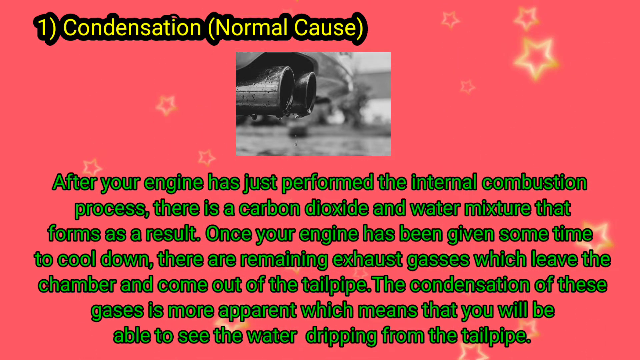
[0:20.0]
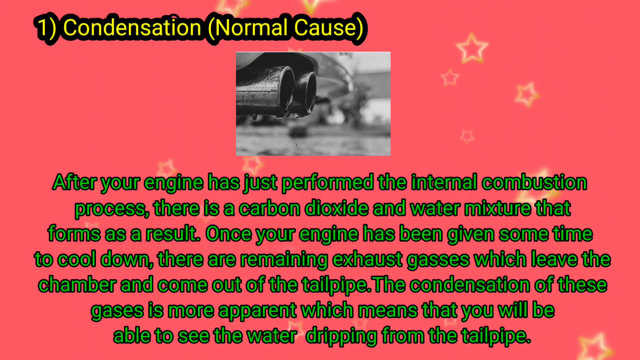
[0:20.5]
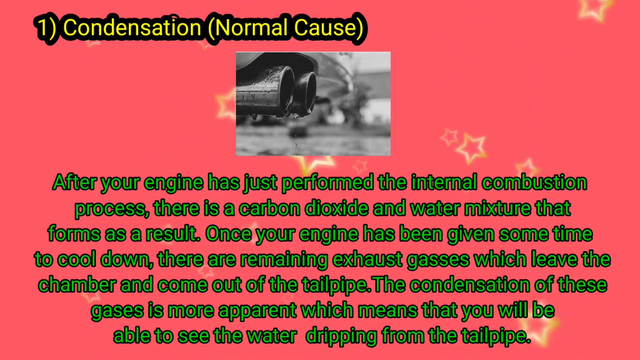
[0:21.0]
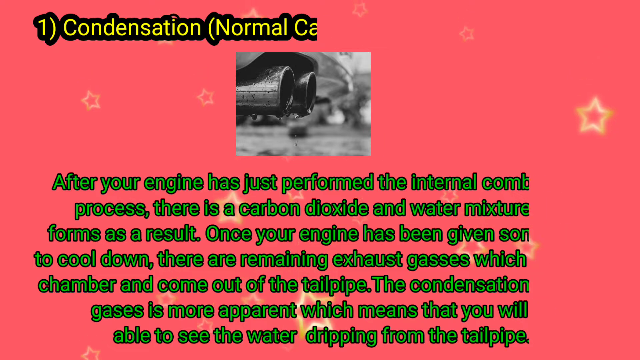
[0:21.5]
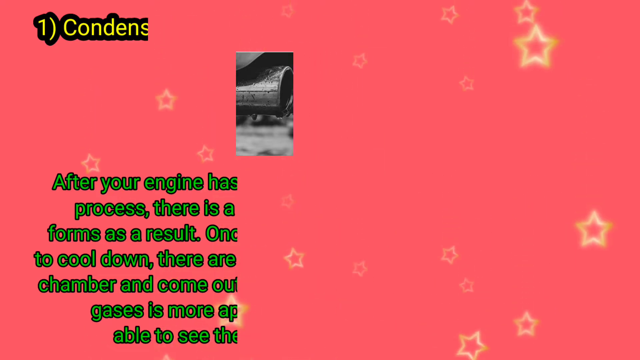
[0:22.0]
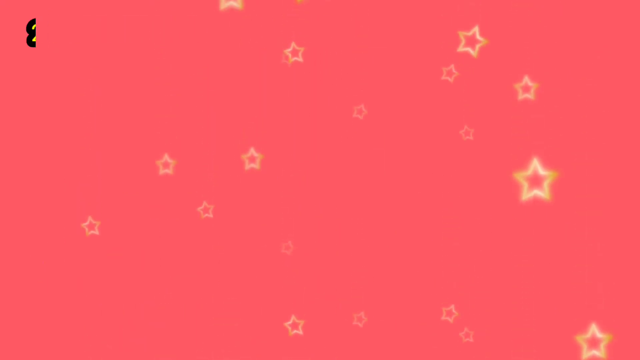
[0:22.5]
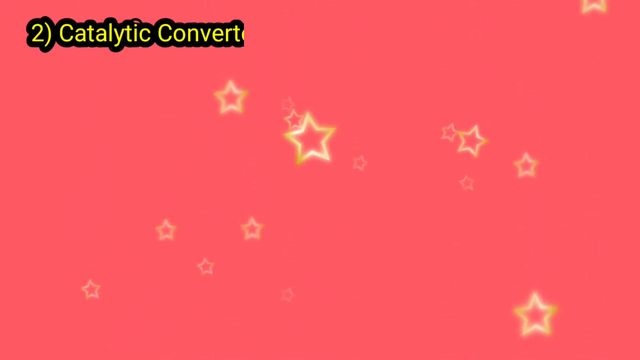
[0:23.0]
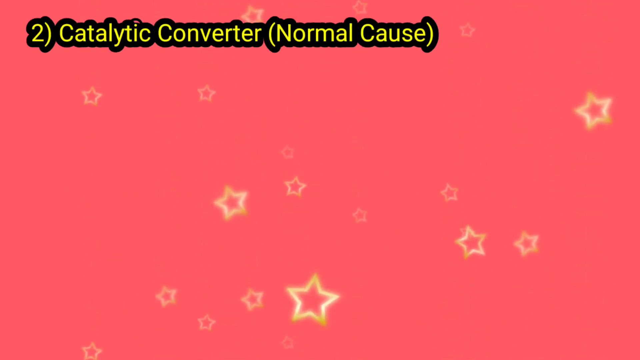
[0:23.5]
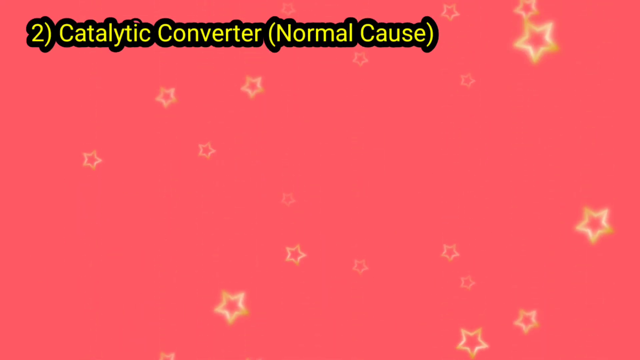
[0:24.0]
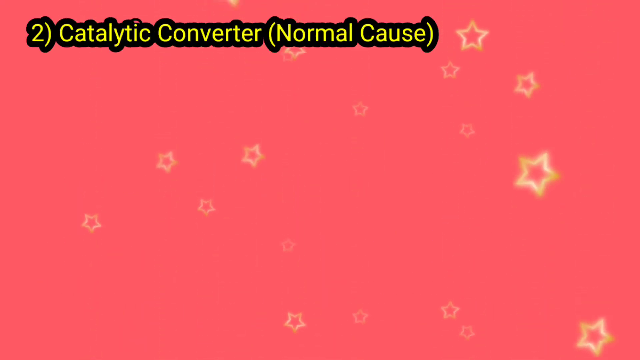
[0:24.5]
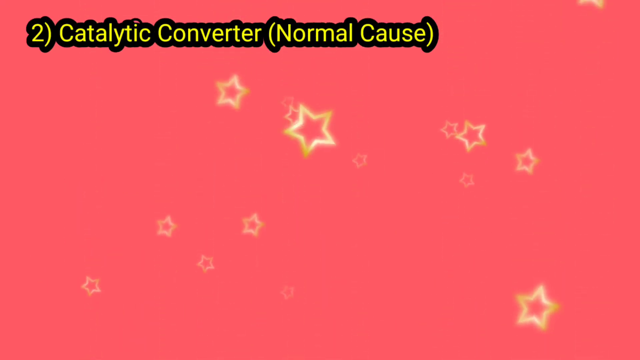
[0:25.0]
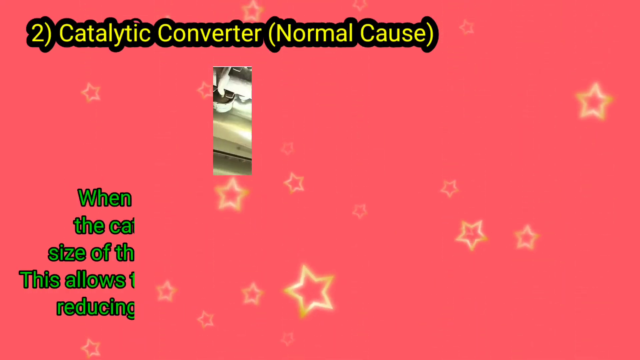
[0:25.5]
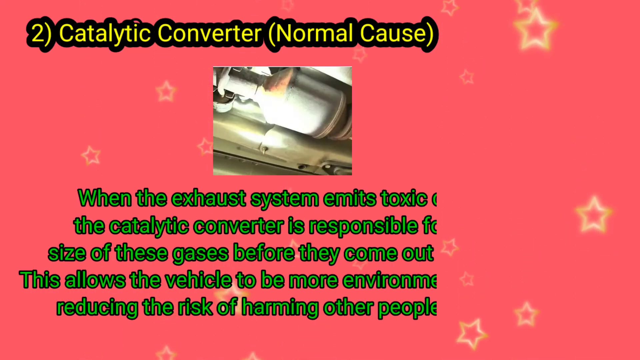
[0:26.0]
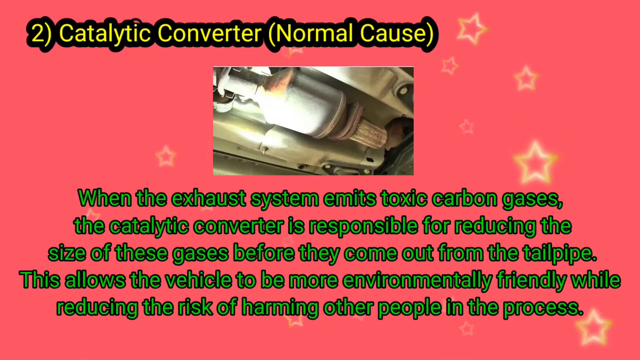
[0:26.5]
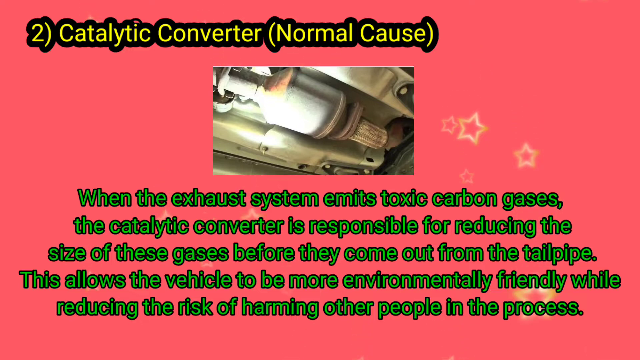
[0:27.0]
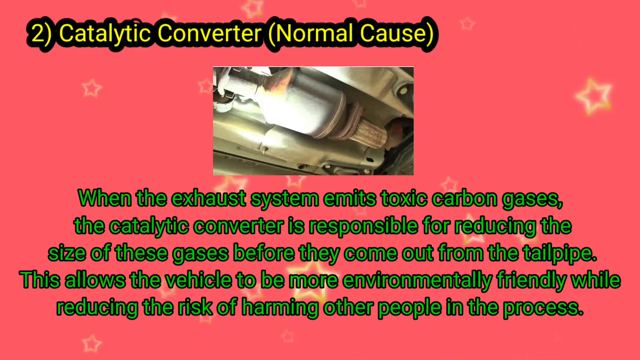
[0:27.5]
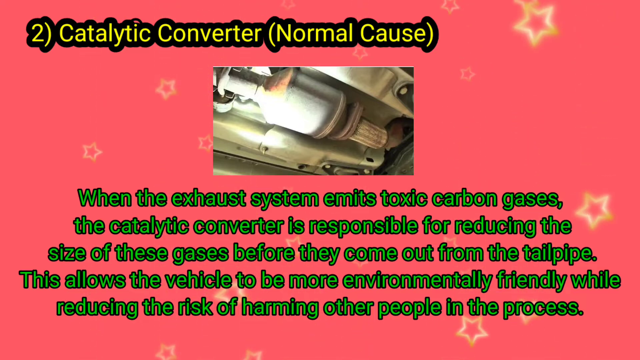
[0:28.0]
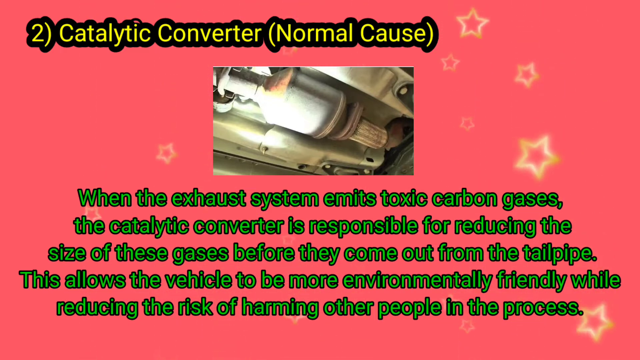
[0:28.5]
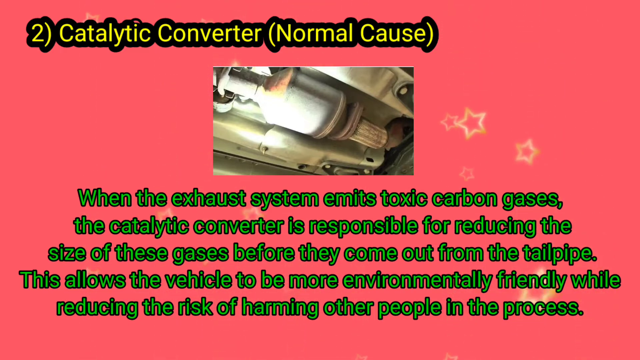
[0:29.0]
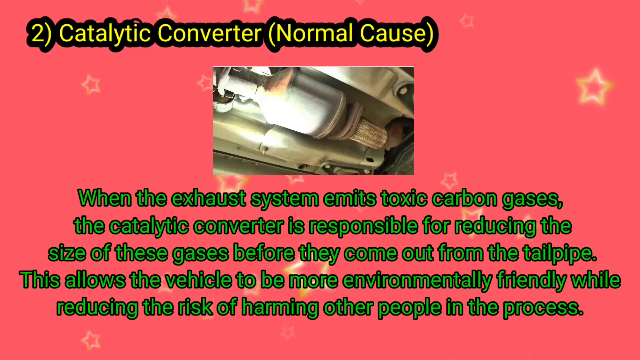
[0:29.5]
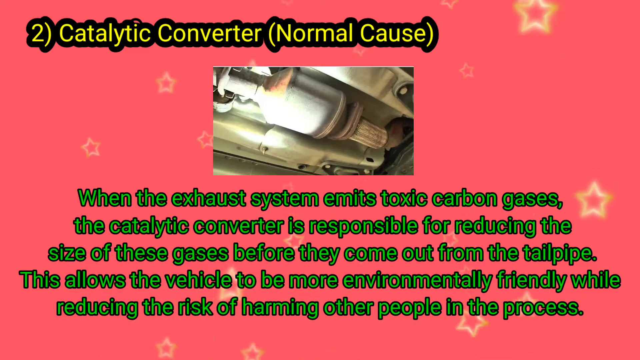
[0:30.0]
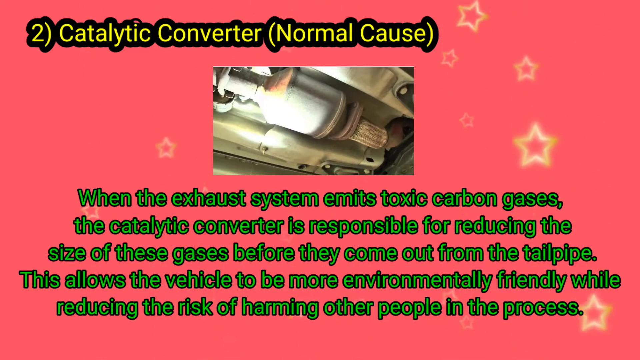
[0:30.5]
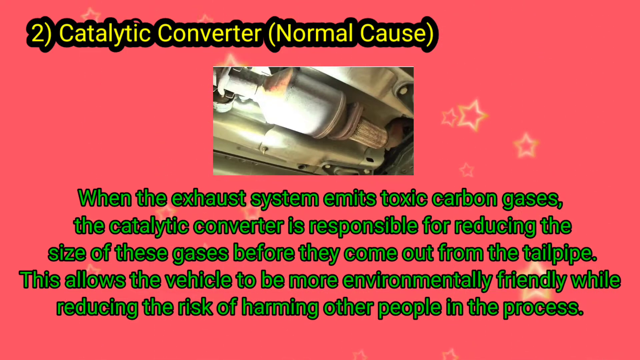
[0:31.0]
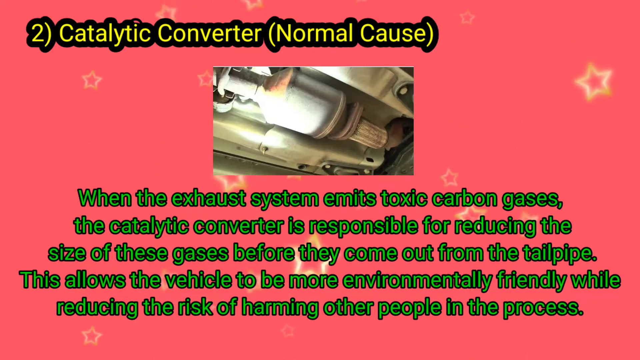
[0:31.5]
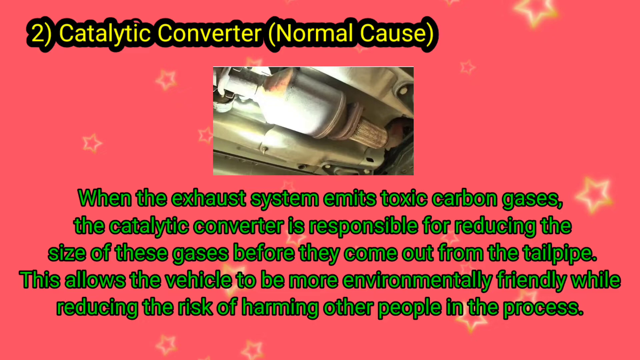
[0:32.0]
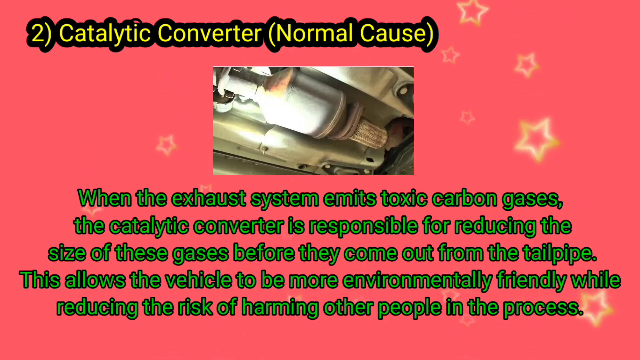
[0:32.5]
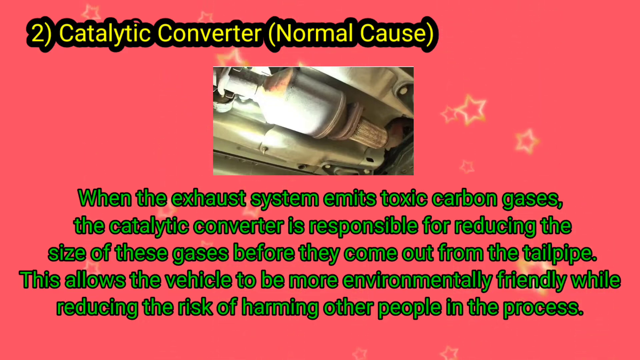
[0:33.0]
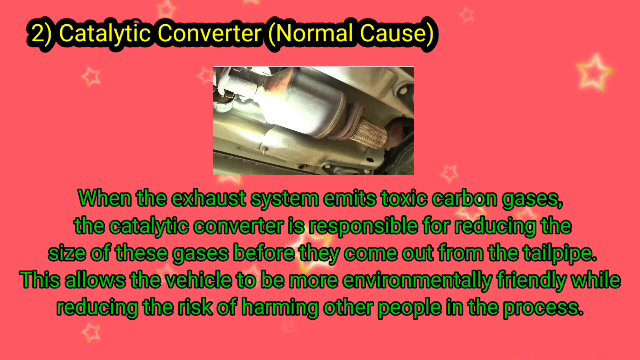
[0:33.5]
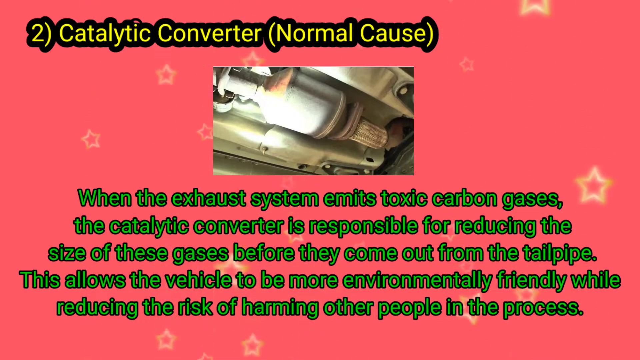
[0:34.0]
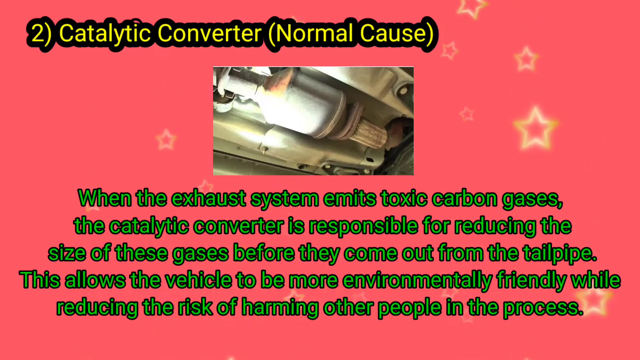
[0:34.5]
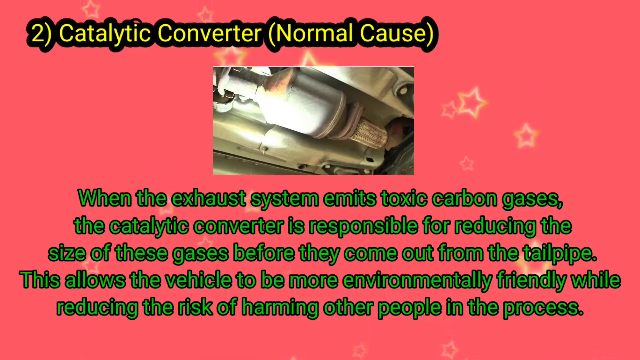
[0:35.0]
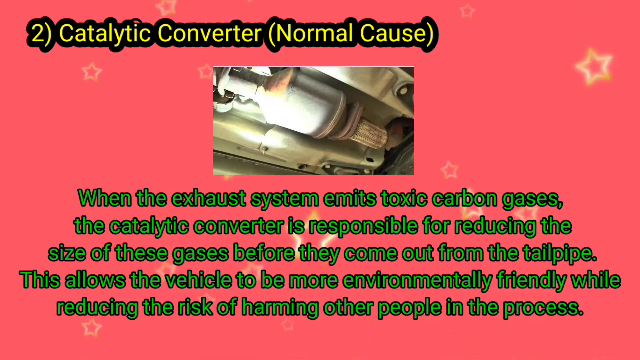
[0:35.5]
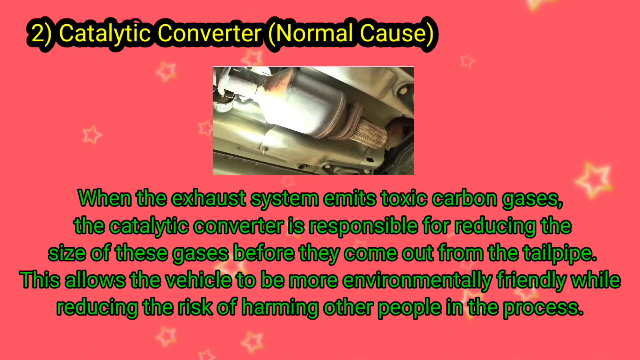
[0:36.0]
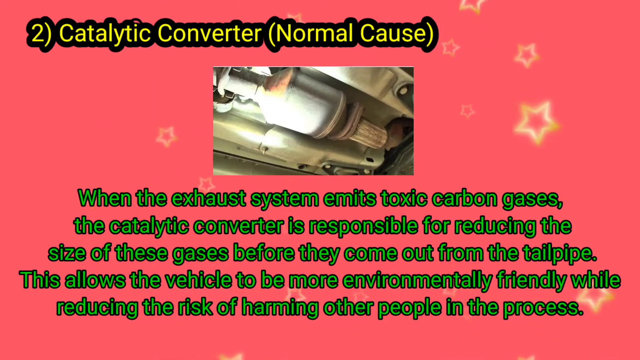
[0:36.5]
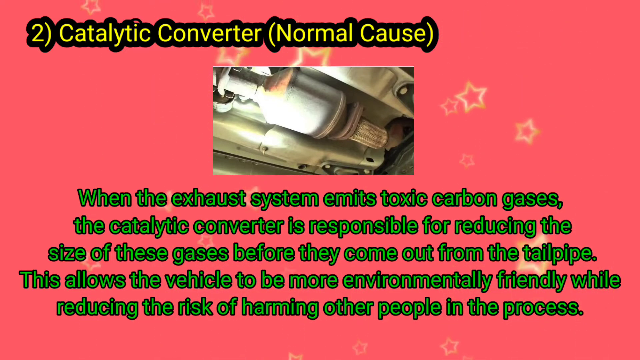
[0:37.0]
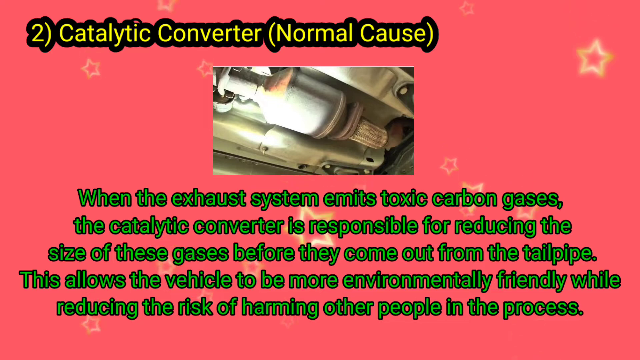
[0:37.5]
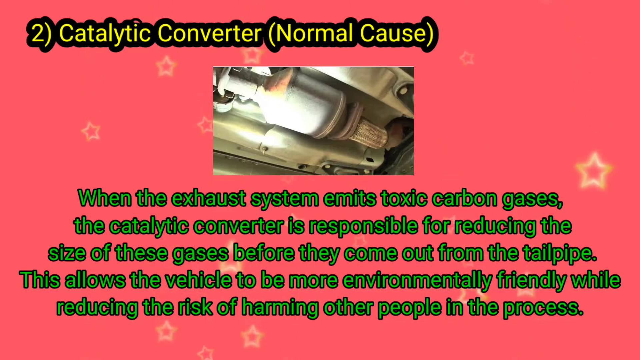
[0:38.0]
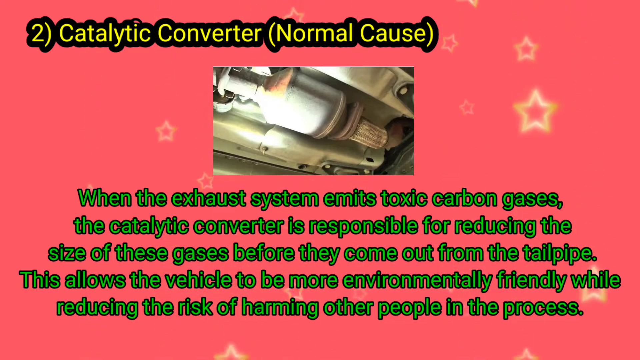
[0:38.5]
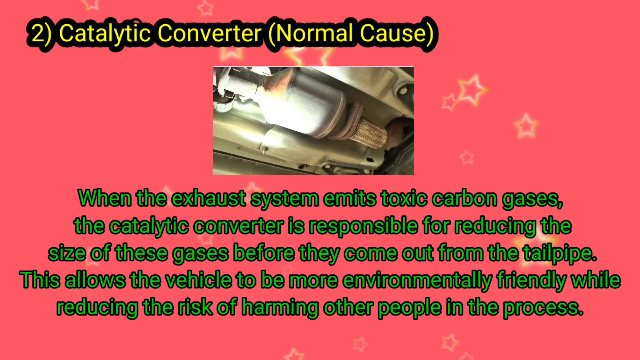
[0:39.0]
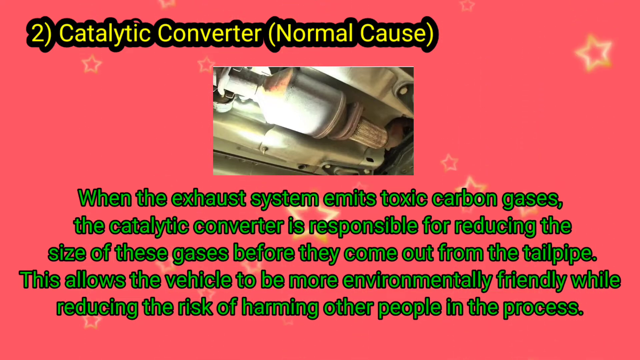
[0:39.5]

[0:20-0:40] Yellow stars fall downwards over a pink background. In the top center is a black and white photo of two gray tailpipes. Yellow lettering at the top reads "one condensation, normal cause", and green text below it reads "after your engine has just performed the internal combustion process, there is a carbon dioxide and water mixture that forms as a result. Once your engine has been given some time to cool down, there are remaining exhaust gases which leave the chamber and come out of the tailpipe. The condensation of these gases is more apparent, which means that you will be able to see the water dripping from the tailpipe." The yellow lettering at the top then changes to "catalytic converter, normal cause", and the green lettering below reads "when the exhaust system emits toxic carbon gases, the catalytic converter is responsible for reducing the size of these gases before they come out from the tailpipe. This allows the vehicle to be more environmentally friendly while reducing the risk of harming other people in the process." A grey catalytic converter is shown at the top.